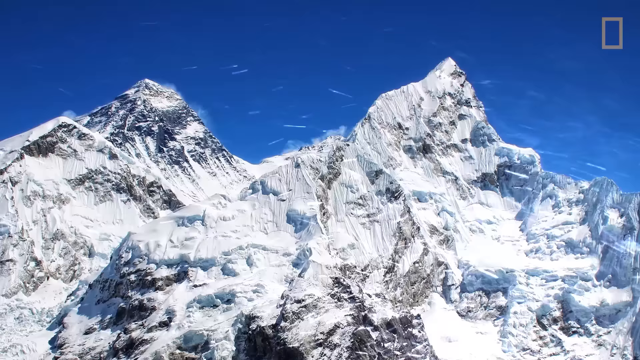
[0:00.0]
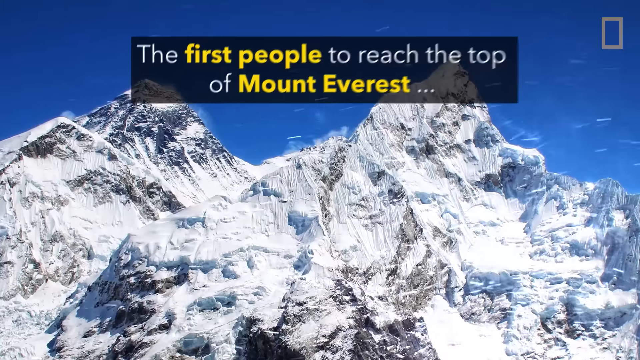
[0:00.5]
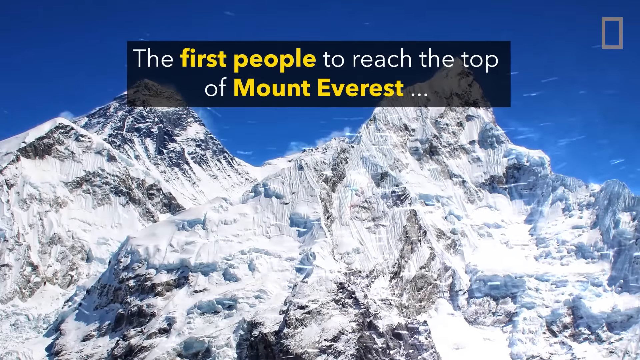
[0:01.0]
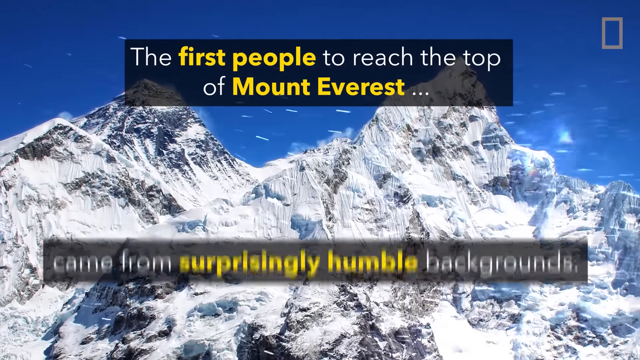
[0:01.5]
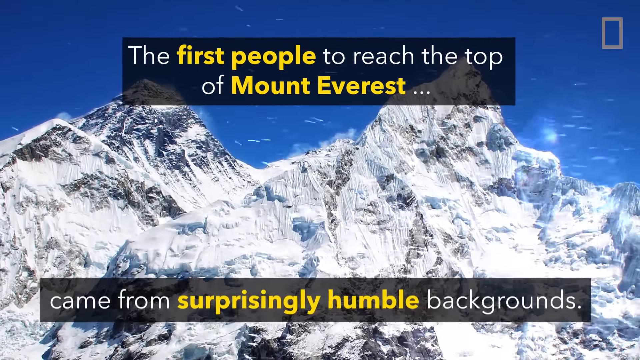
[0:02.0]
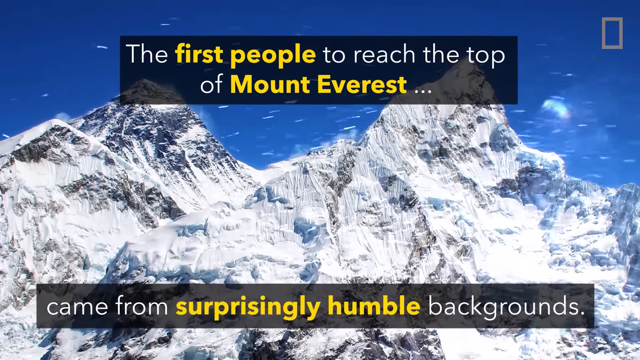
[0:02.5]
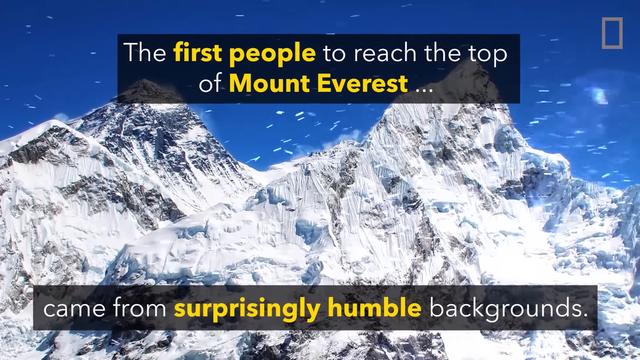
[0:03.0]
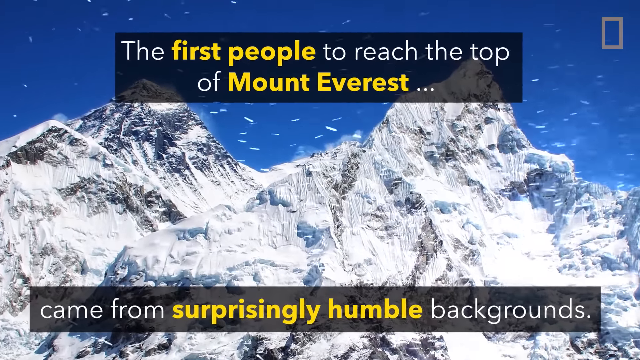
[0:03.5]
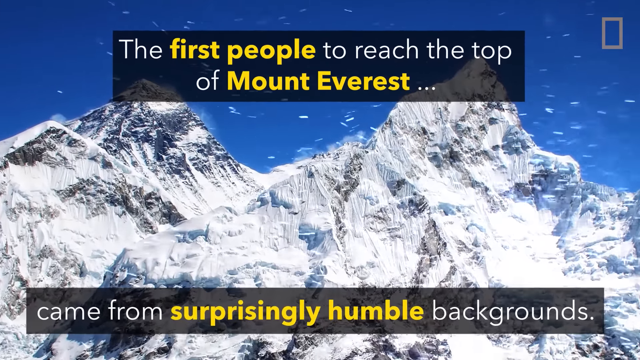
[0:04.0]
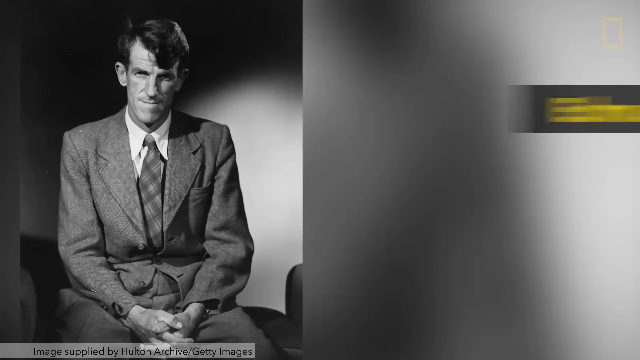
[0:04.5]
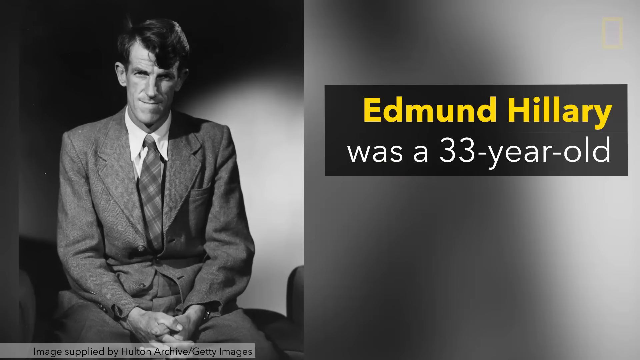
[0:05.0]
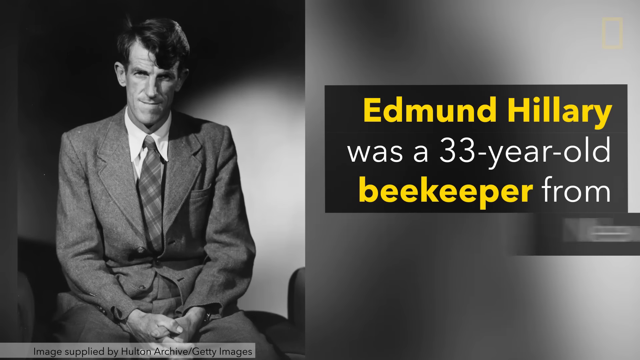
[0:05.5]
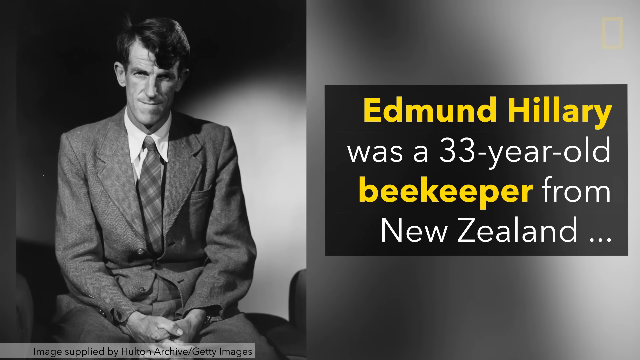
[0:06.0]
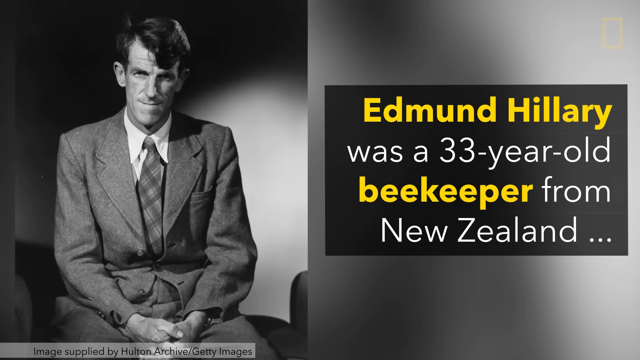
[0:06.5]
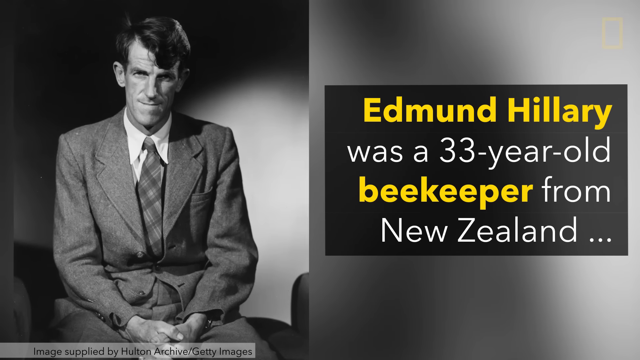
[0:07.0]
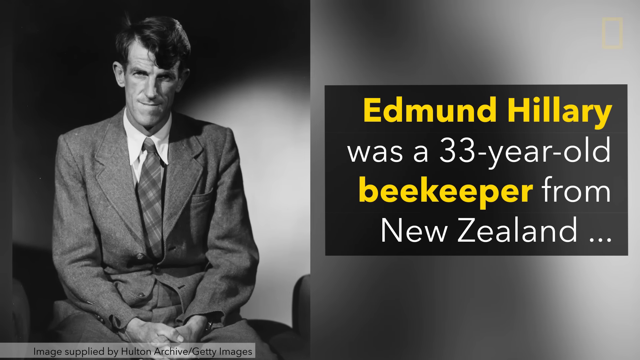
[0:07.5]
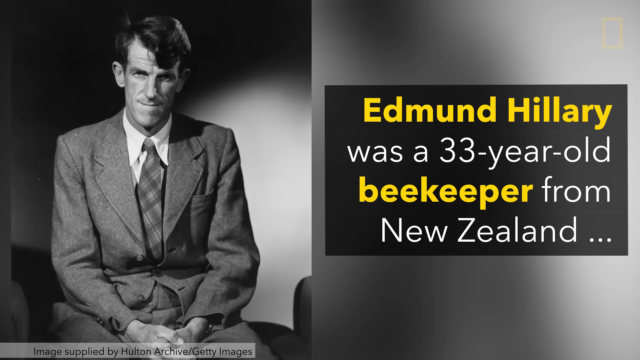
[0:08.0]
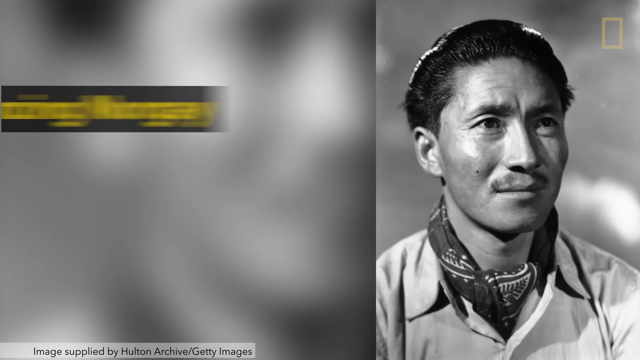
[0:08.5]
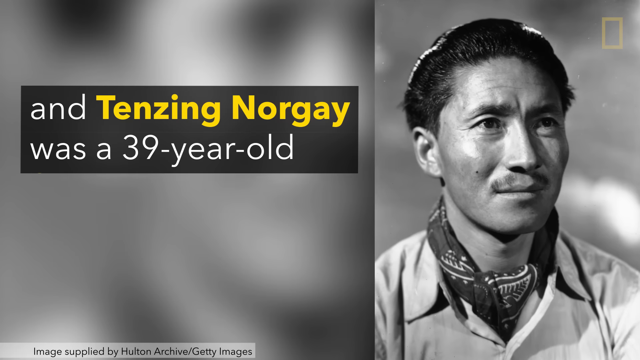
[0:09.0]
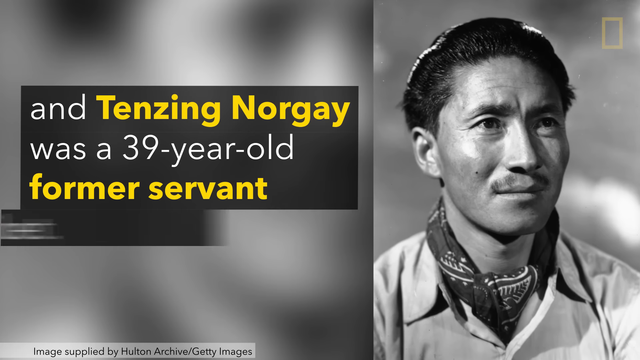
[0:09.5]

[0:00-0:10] The video opens on a close-up of two of the peaks of Mount Everest, with an extremely blue sky at the top of the screen above very snowy-looking mountain peaks. The National Geographic rectangle logo is in the top right of the screen, and black, opaque text boxes read "the first people to reach the top of Mount Everest come from a surprisingly humble background." The screen changes to a photograph of a man, with a text box on the right-hand side stating that his name is Edmund Hillary and he was a 33-year-old beekeeper from New Zealand. The next screen shows an image of another man, his picture on the right-hand side, with text stating that this is Tenzing Norgay, a 39-year-old former servant from Tibet.